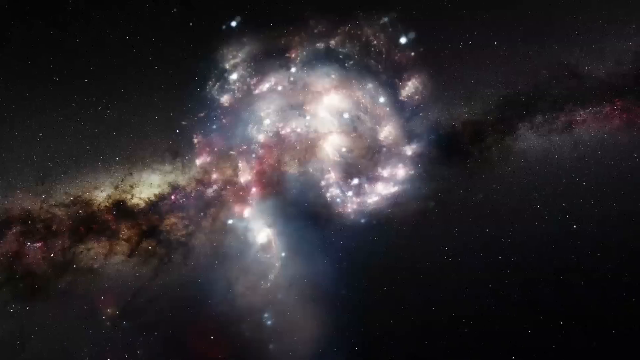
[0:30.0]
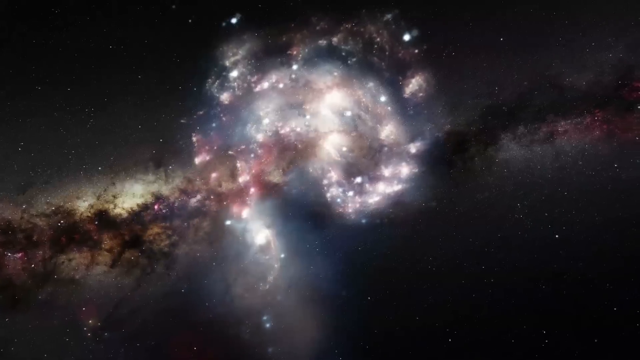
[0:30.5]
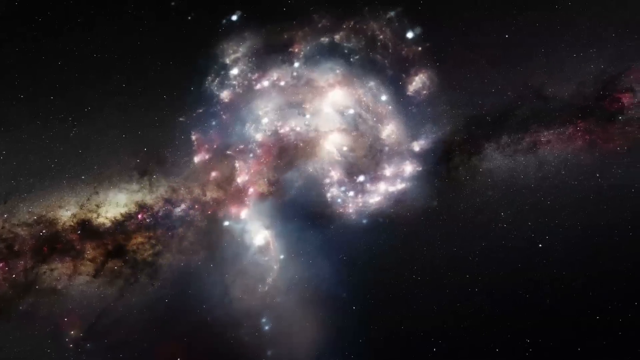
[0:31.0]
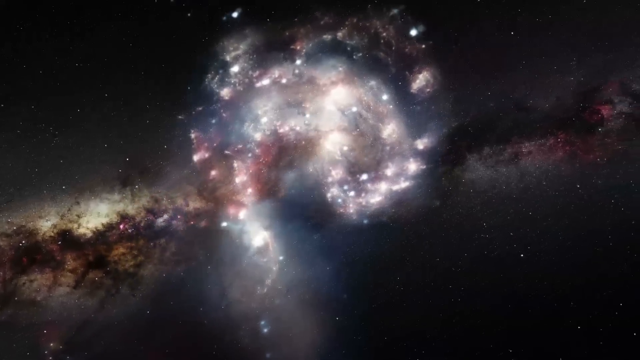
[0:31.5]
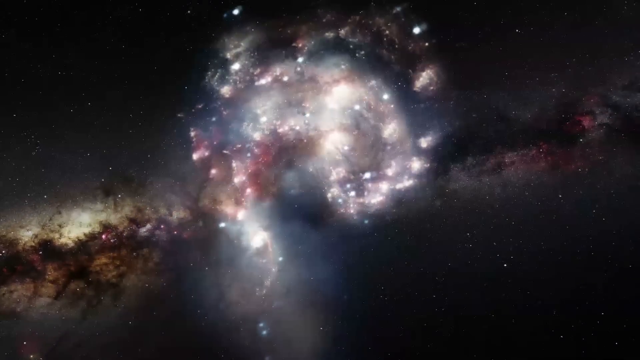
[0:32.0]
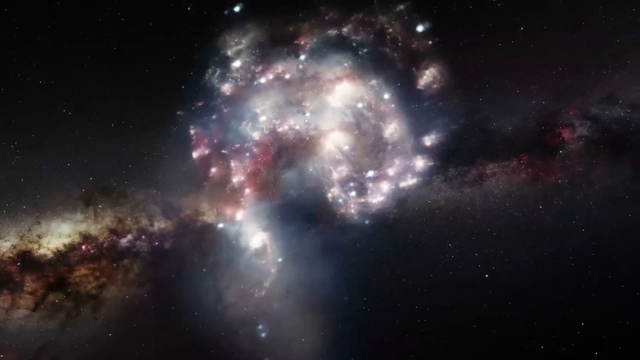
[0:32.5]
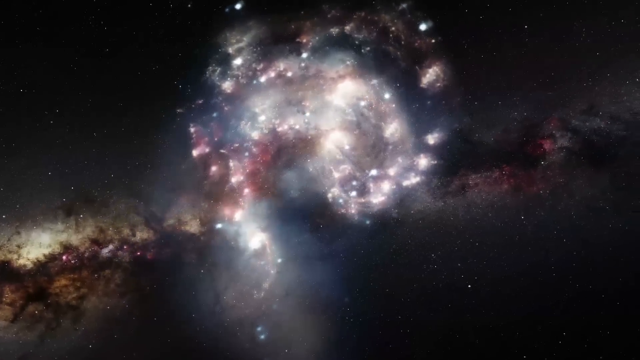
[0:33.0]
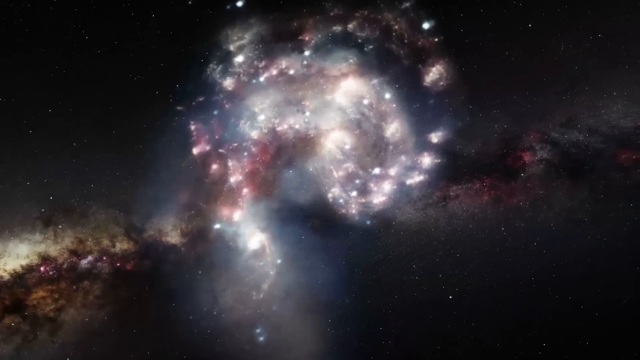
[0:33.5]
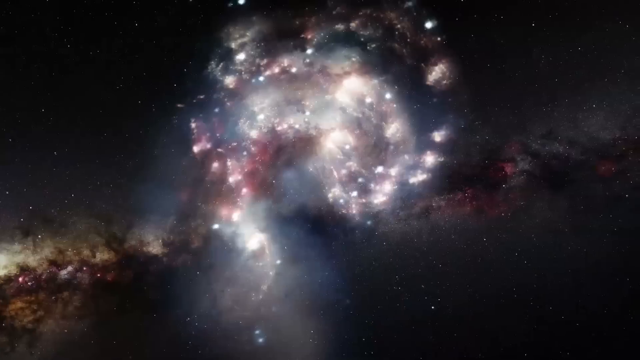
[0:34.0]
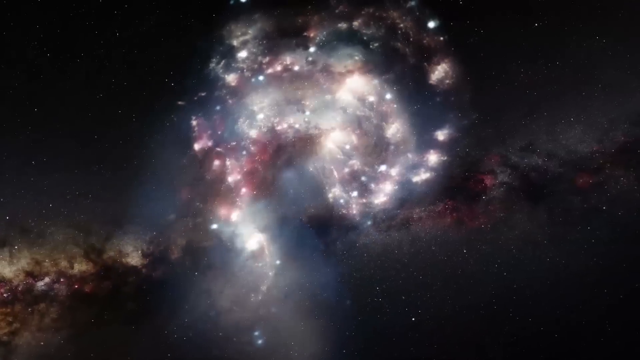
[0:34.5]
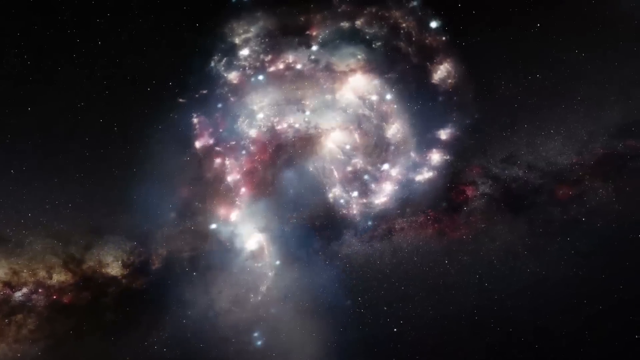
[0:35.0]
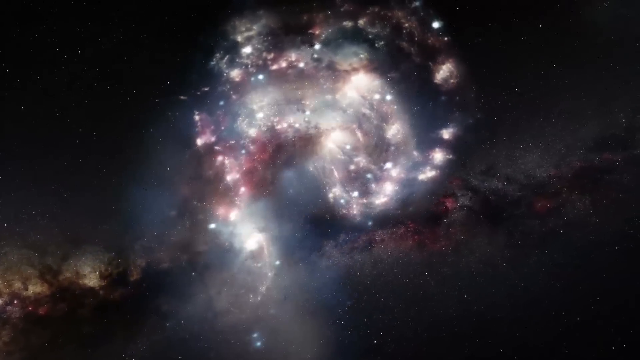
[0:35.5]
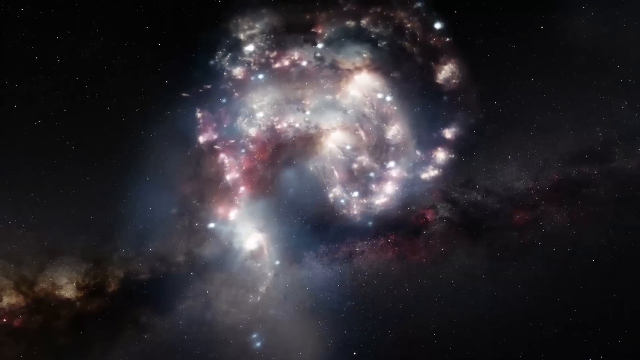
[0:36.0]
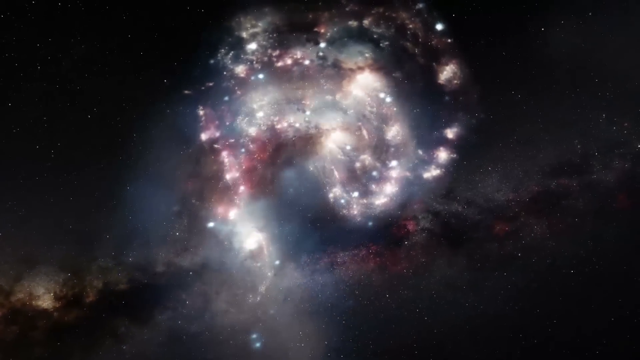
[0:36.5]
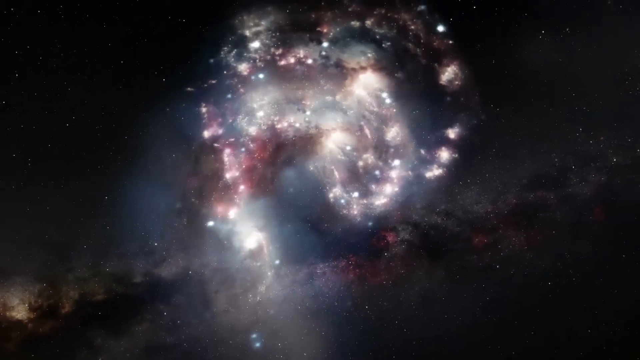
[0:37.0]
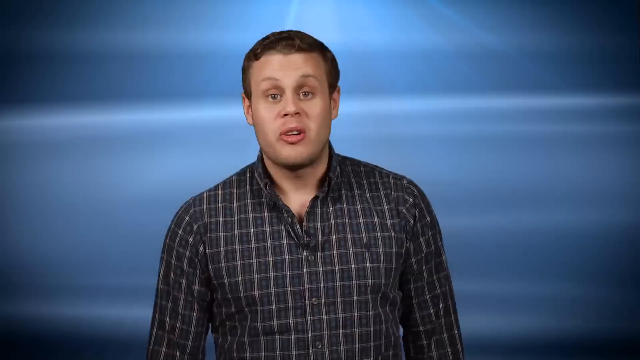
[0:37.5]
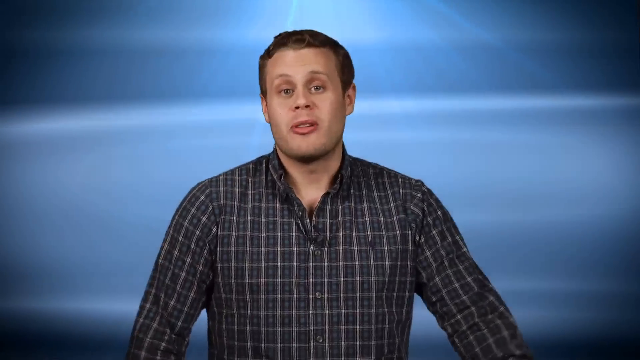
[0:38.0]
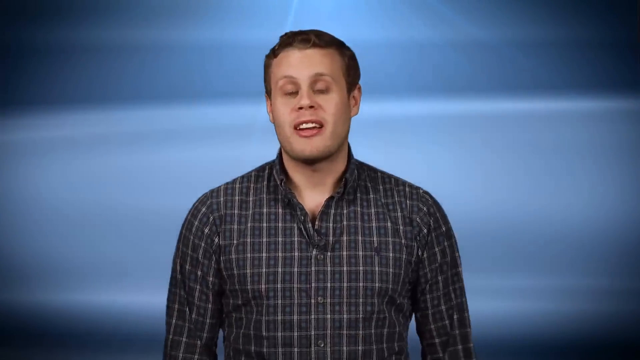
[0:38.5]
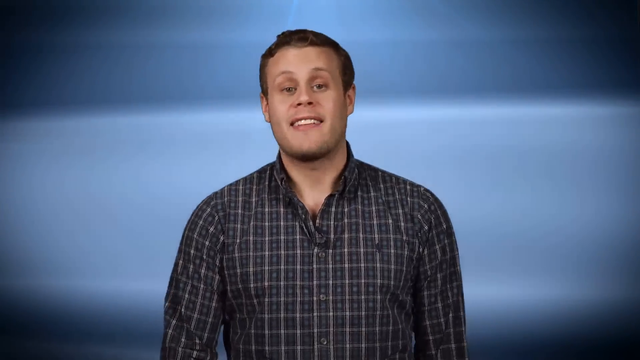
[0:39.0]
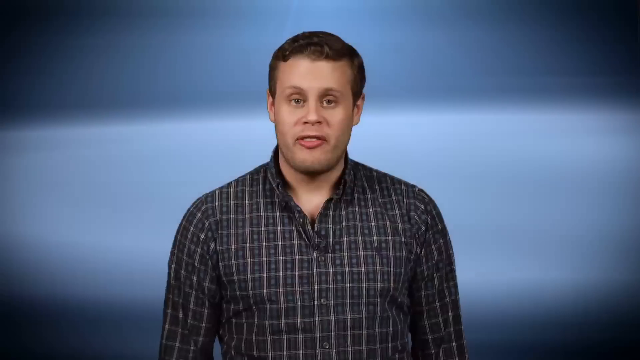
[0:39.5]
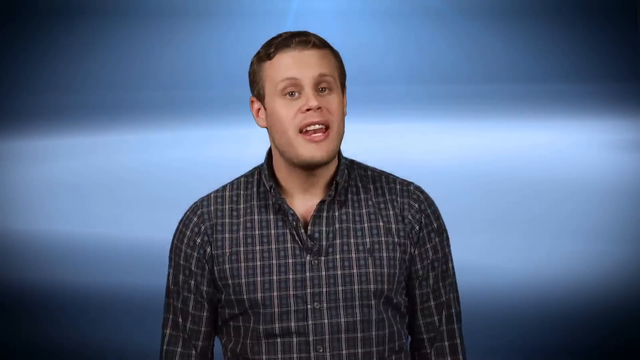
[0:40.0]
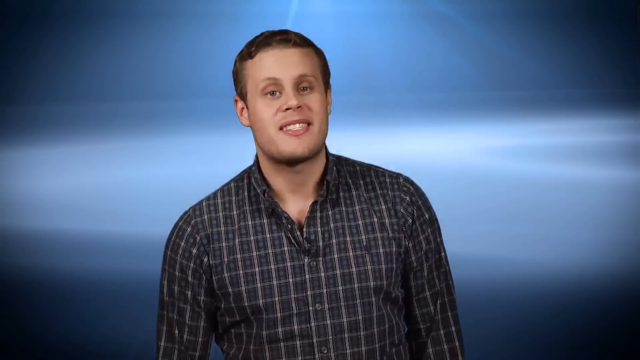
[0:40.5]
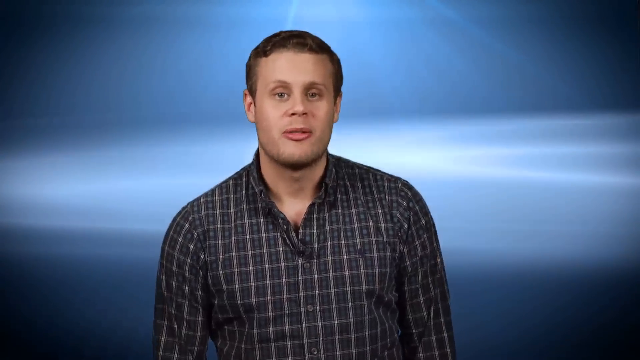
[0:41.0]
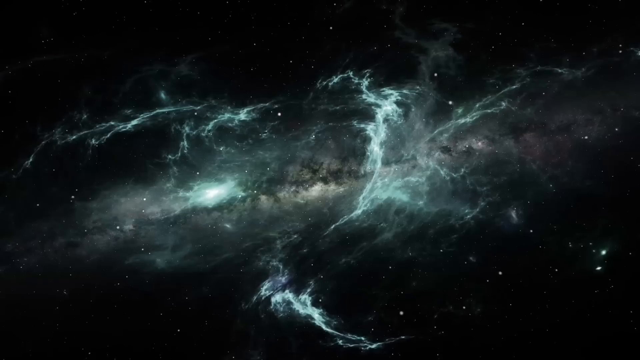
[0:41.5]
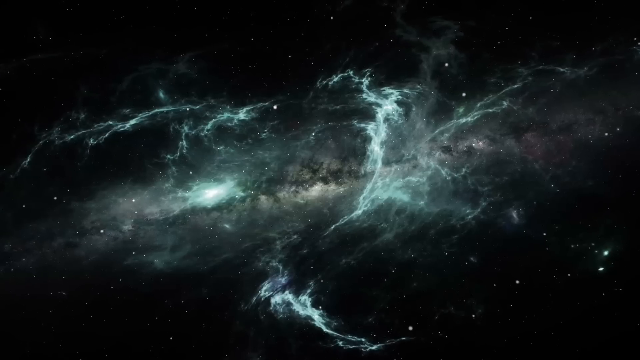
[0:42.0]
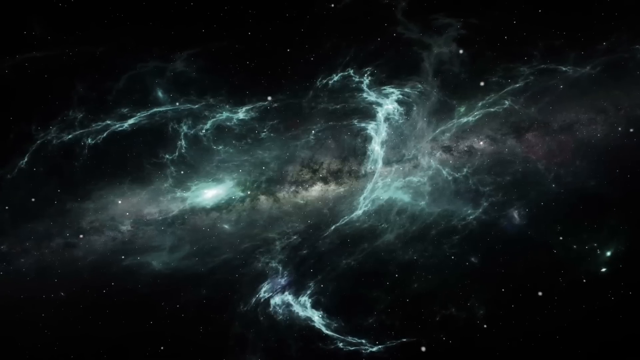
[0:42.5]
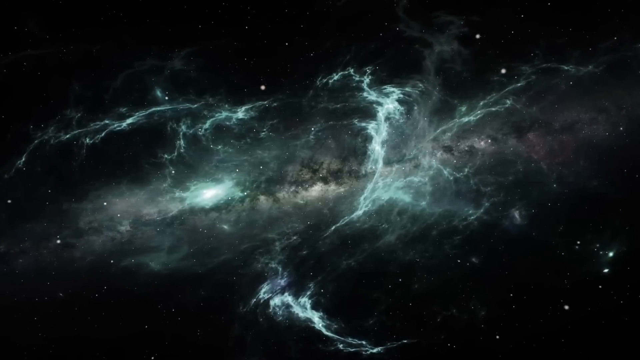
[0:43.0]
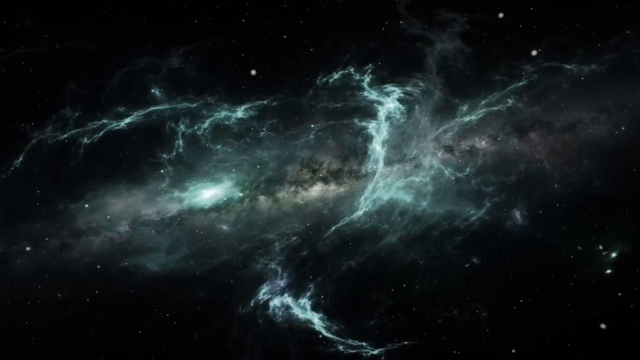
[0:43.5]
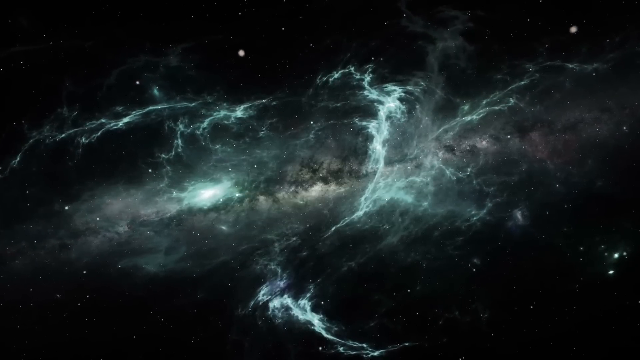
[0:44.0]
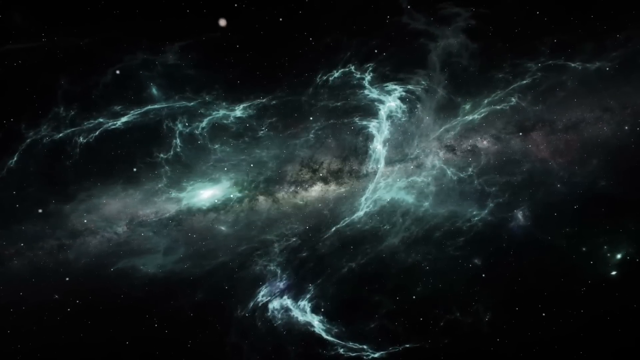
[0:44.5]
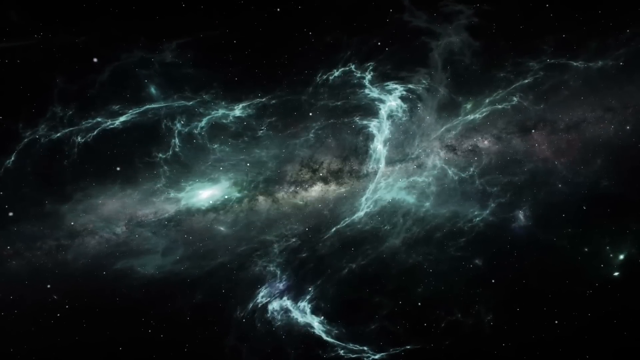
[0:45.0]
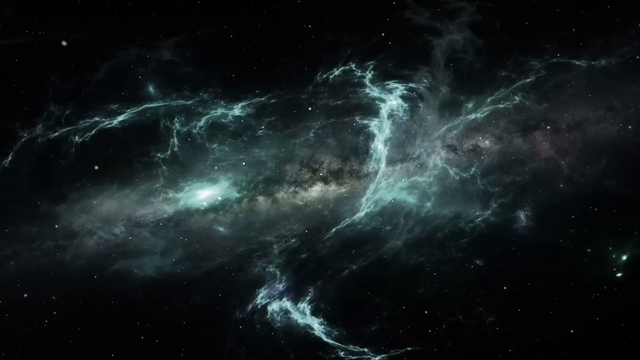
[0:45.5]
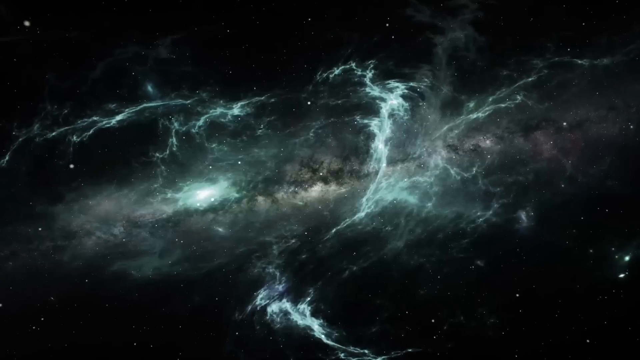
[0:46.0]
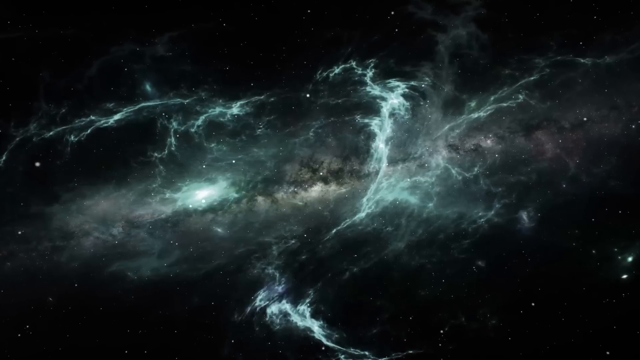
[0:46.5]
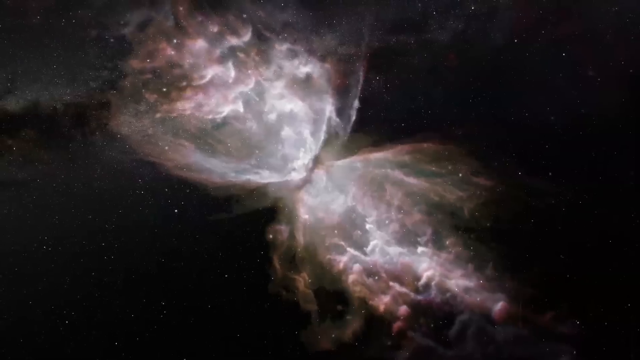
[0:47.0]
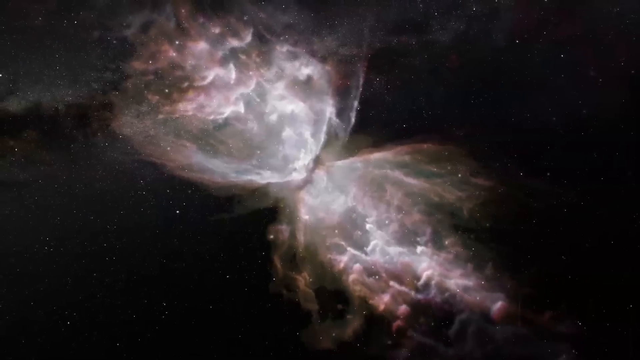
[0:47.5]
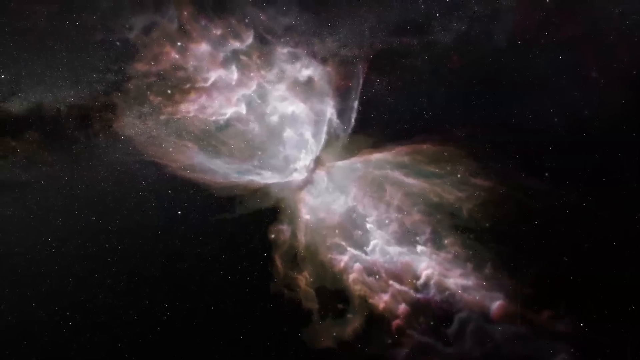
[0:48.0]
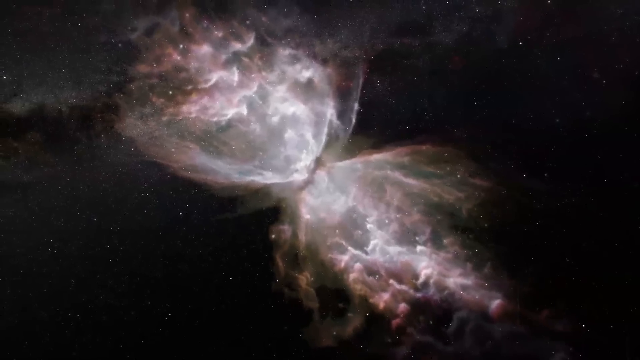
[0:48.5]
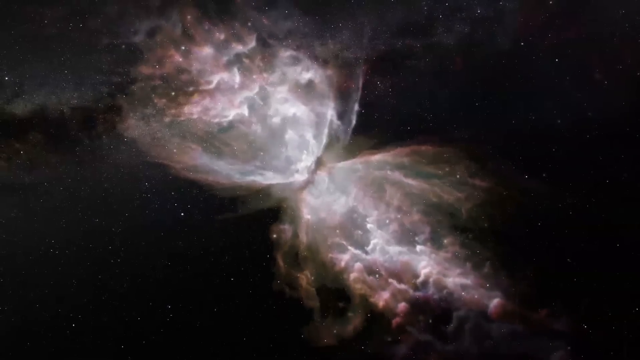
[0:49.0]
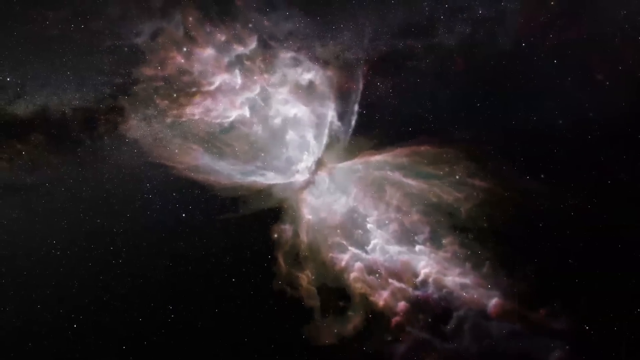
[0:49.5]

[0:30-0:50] Images of space continue, showing what looks almost like the night sky overlaid with images of what looks to be a universe or maybe a galaxy, glowing and rotating. The video cuts back to the man speaking, Patrick Jones, then to more images of celestial structures that glow and wind around each other, looking like a mixture of fog, mist and stars against the night sky of outer space. The man talks in front of what looks to be an animated background, blue with waves on it. He wears a long-sleeved plaid shirt.